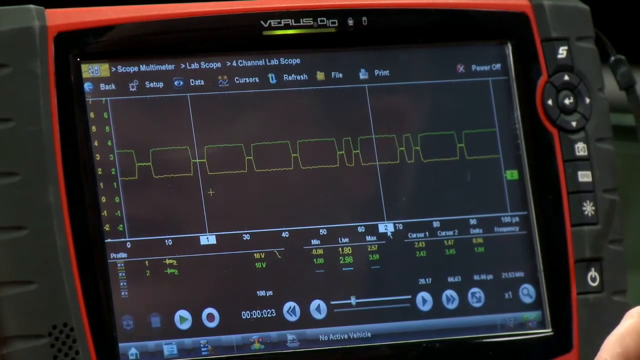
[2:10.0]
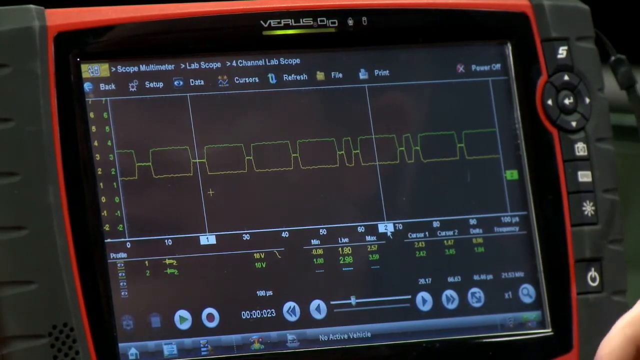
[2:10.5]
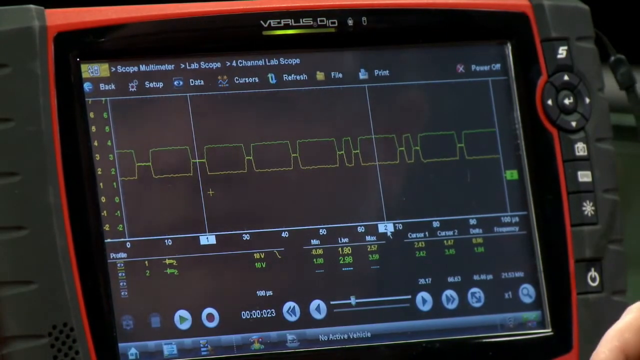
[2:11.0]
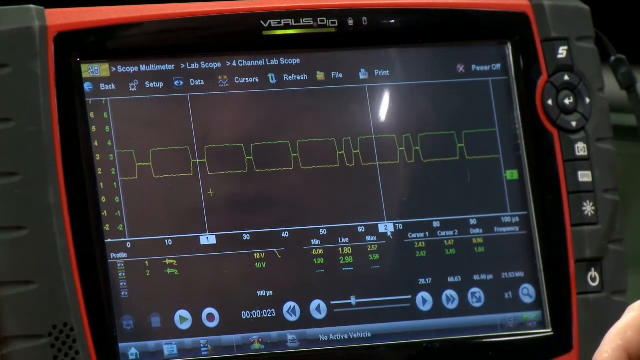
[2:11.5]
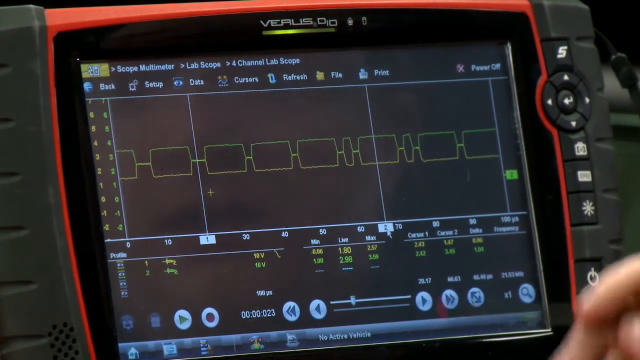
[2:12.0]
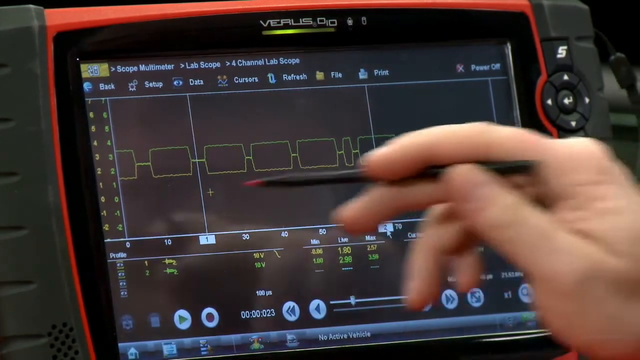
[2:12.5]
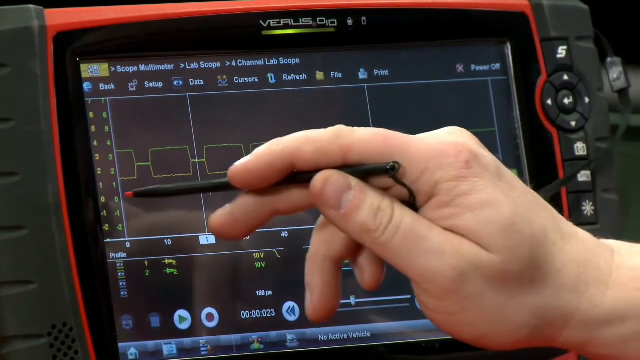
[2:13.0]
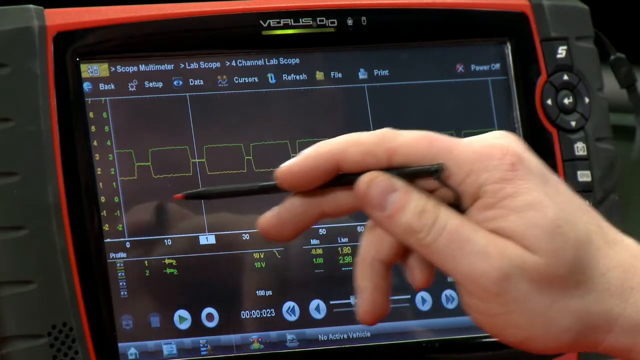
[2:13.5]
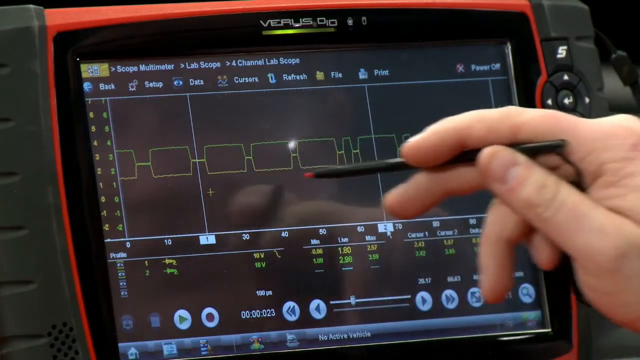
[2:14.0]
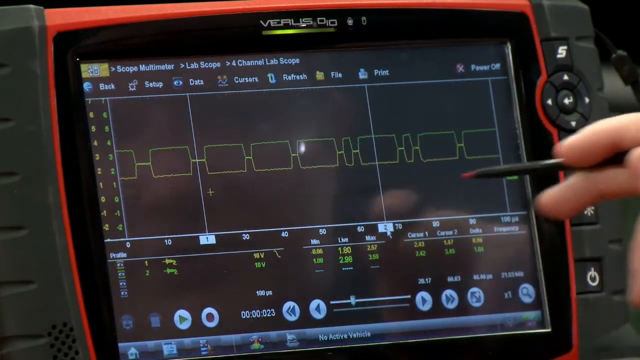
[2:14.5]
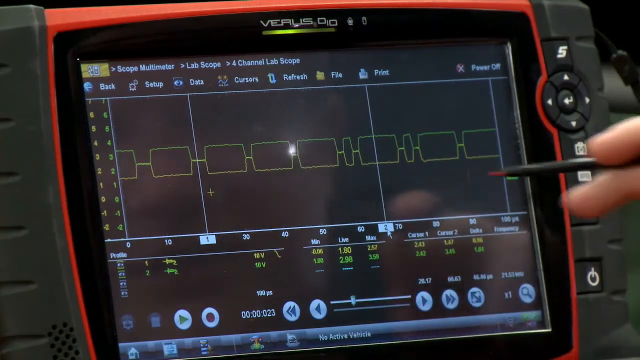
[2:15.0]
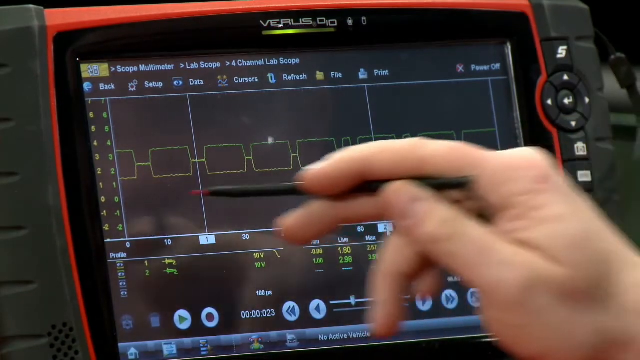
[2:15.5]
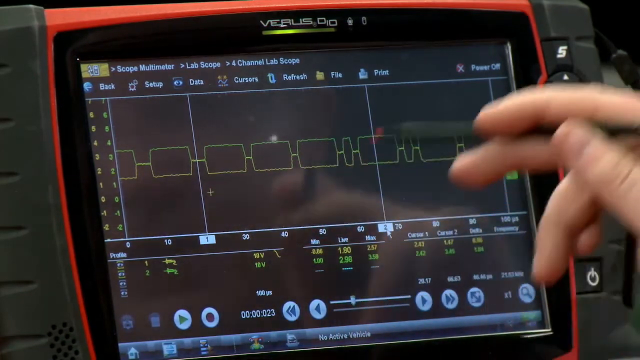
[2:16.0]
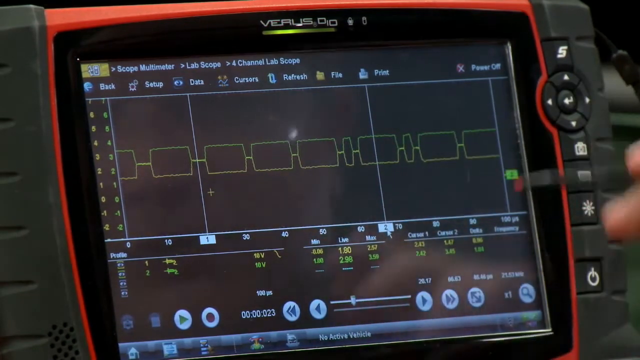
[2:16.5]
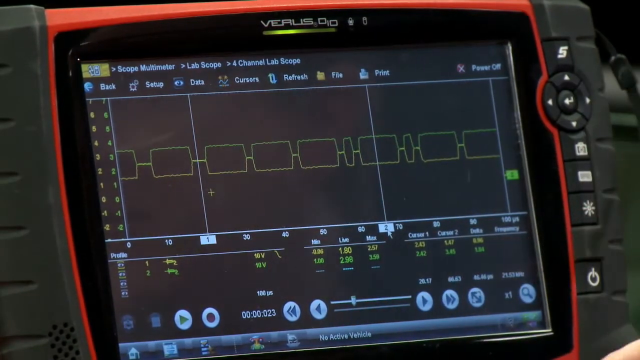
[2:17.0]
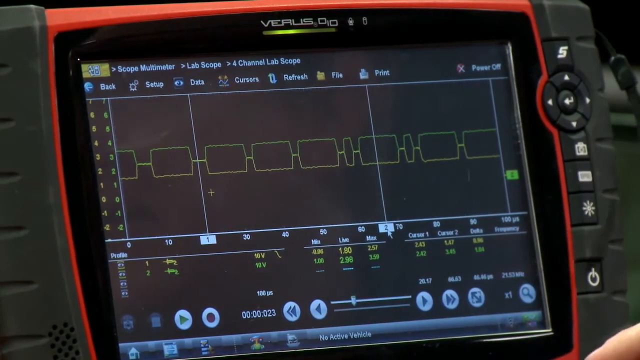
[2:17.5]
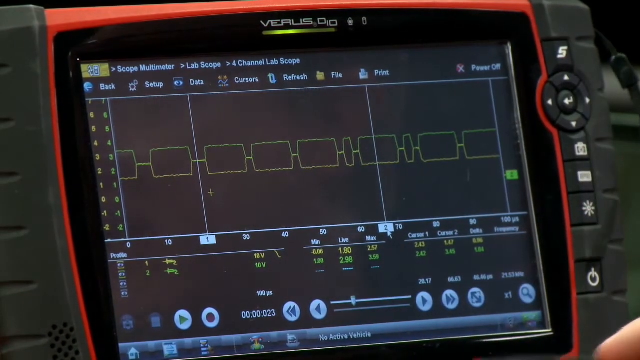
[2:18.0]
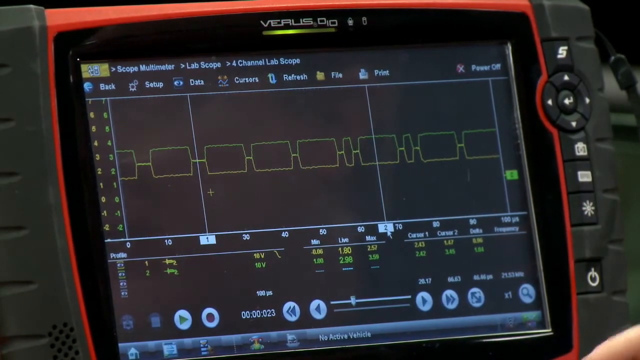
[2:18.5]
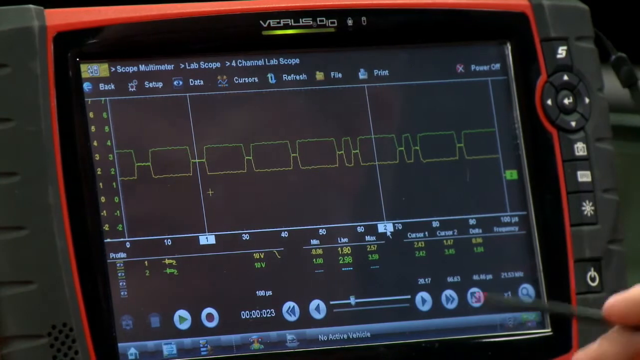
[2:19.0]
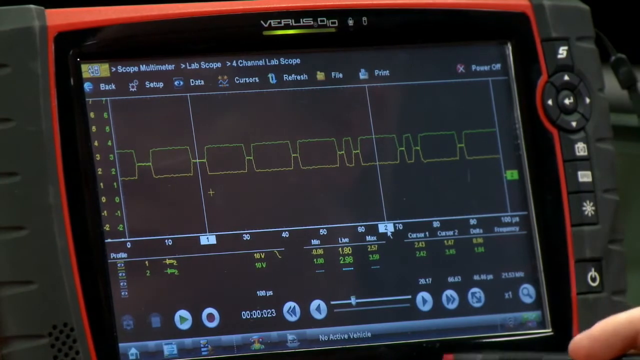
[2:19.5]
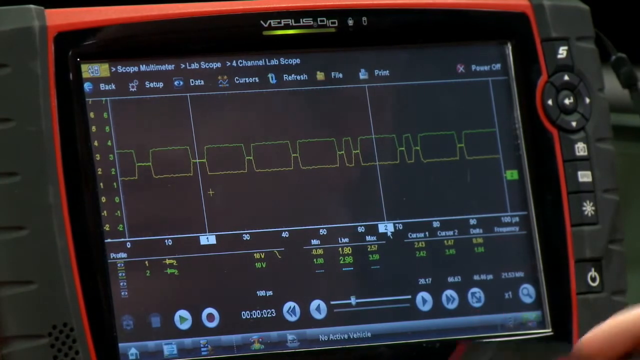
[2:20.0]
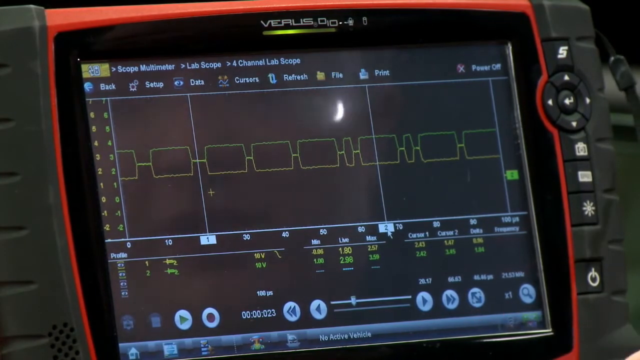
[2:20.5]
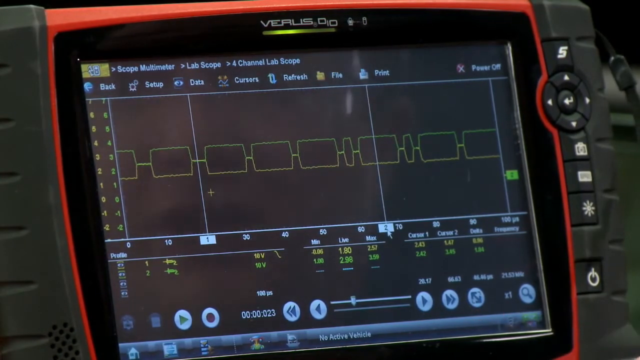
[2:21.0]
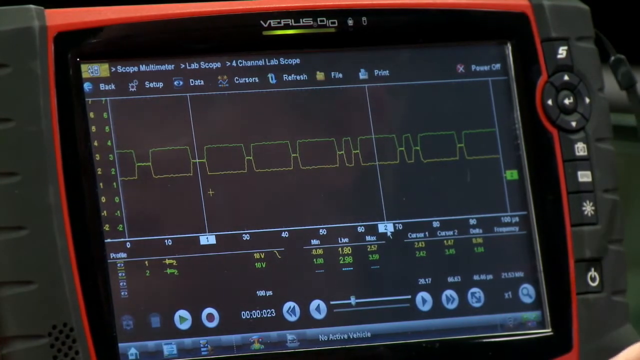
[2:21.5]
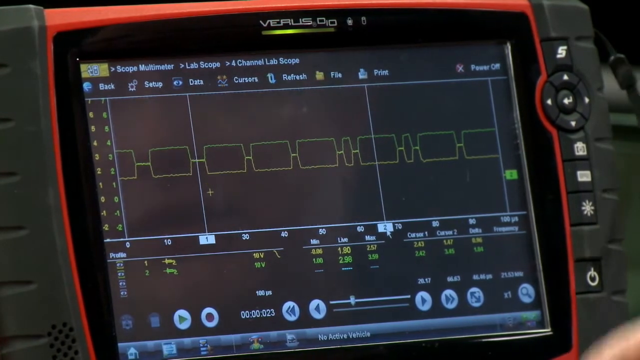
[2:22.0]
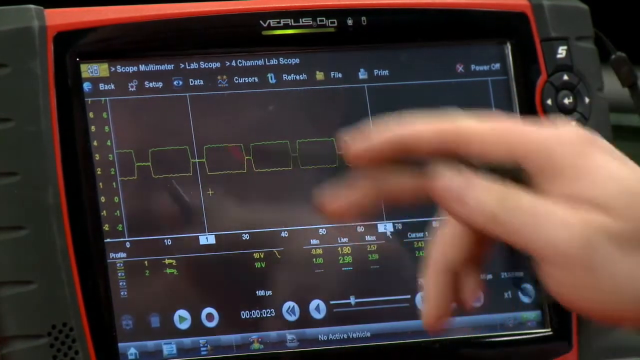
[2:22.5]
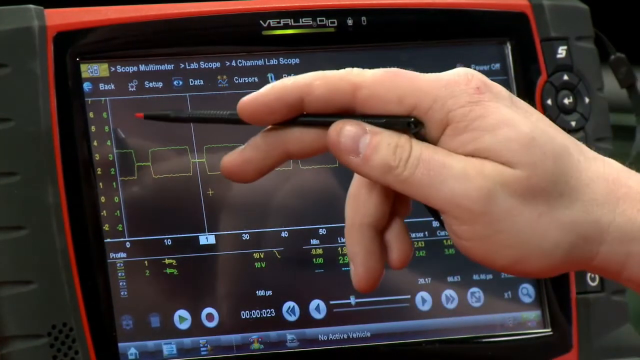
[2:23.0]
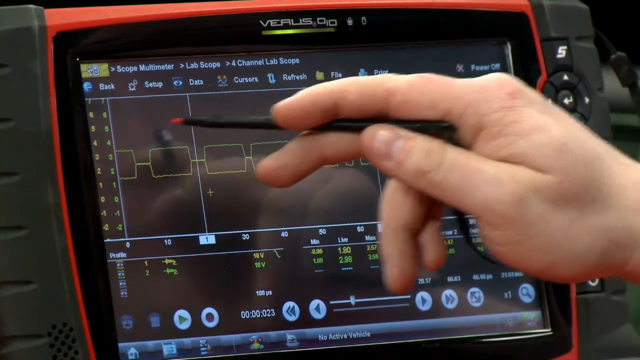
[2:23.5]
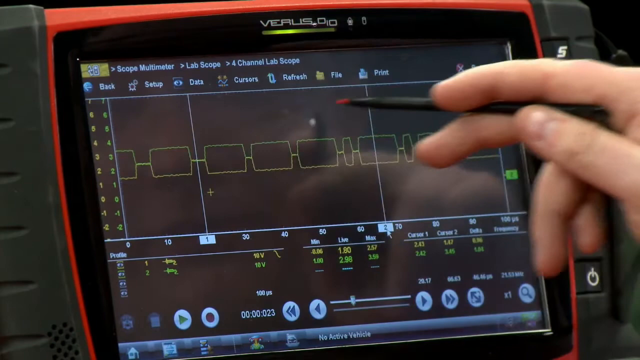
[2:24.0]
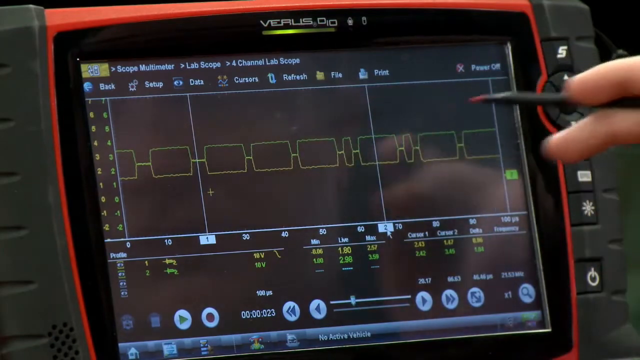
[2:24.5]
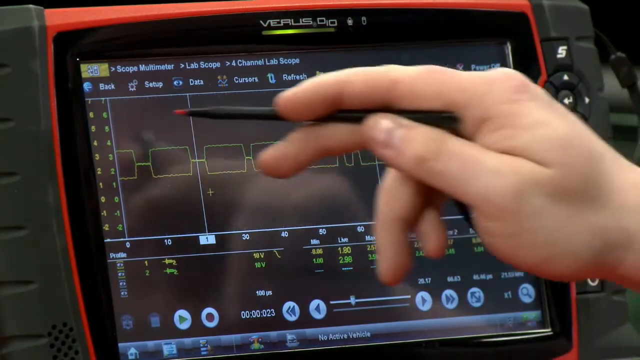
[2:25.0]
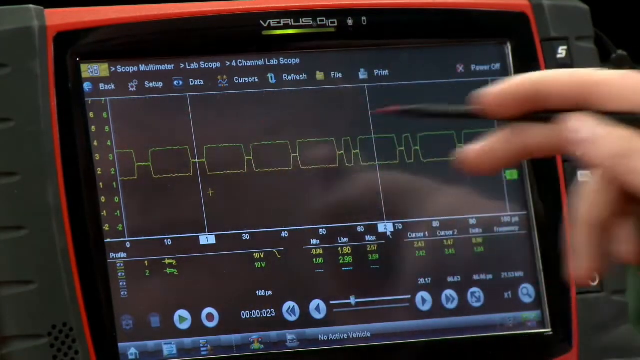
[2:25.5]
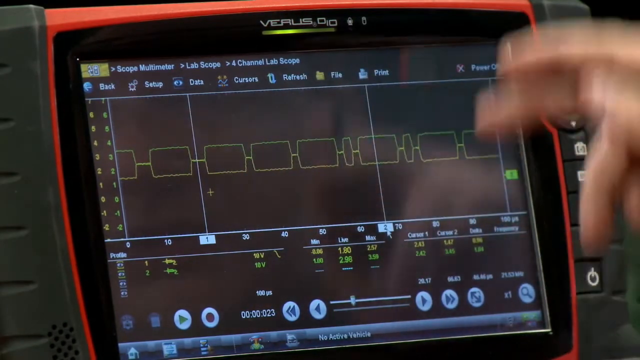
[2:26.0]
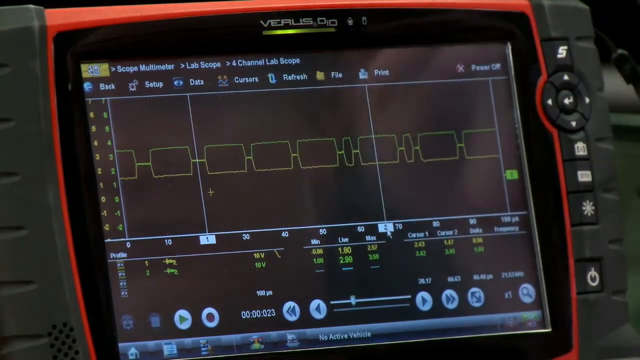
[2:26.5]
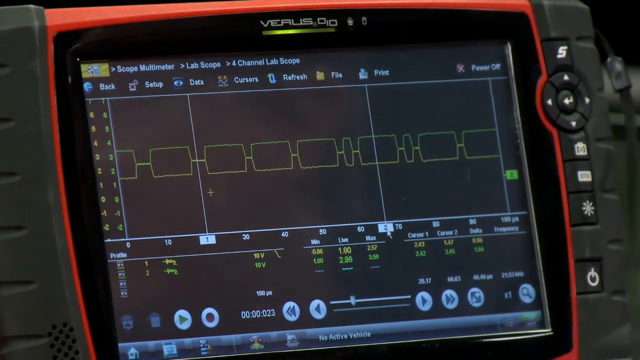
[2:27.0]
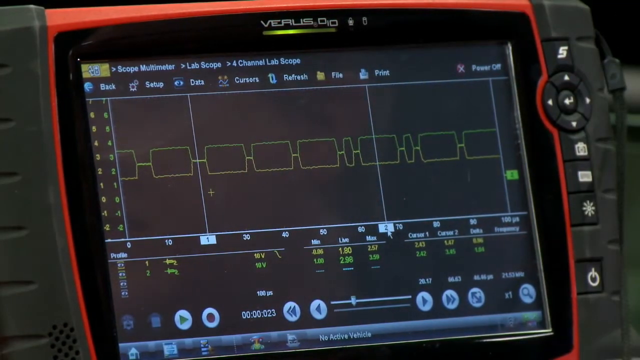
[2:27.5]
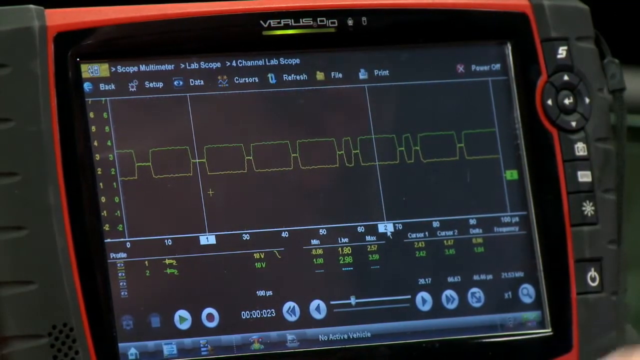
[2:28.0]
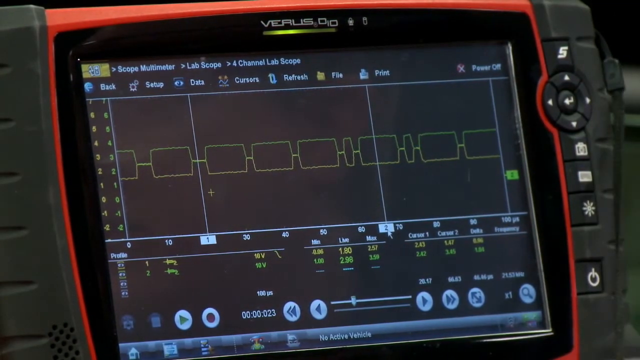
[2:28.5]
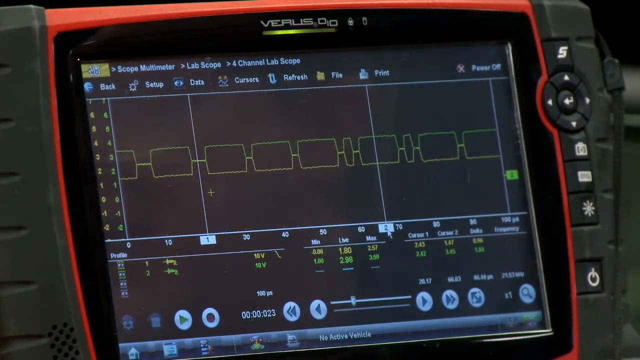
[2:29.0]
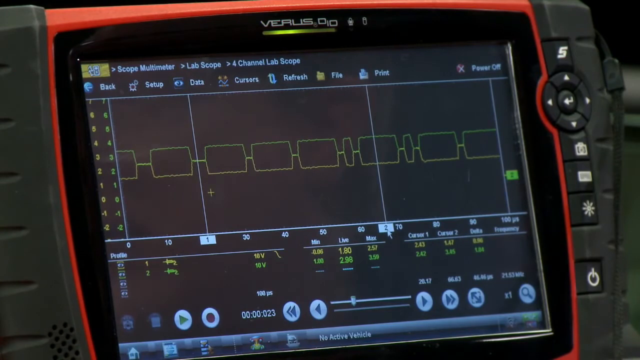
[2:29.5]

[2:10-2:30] Jason, the field trainer, continues moving his stylus pen across the Versus display, pointing to various numbers and passing across the middle of the screen where yellow rectangular shapes scroll from right to left. The display has buttons labeled "back," "setup," "data," "cursors," "refresh," "file" and "print," and "power off" in the upper right corner.